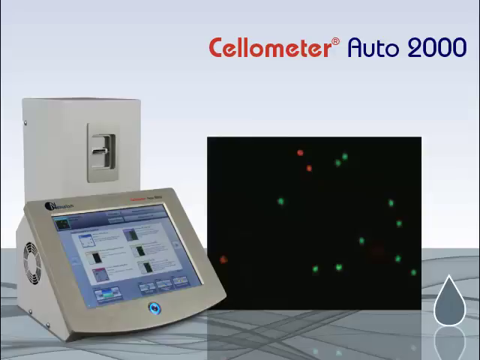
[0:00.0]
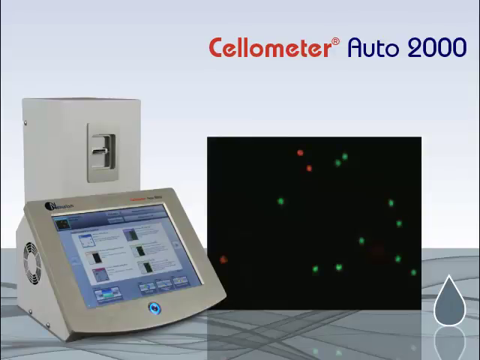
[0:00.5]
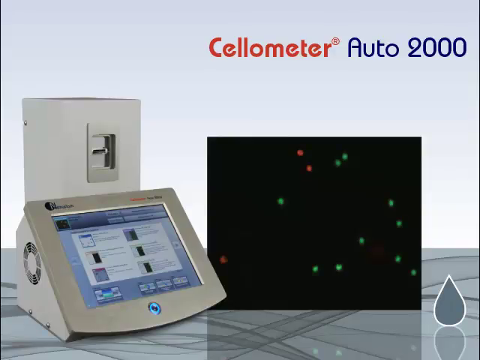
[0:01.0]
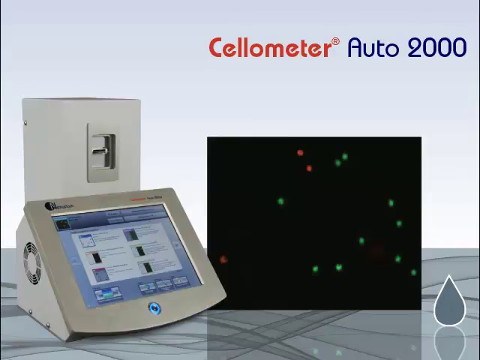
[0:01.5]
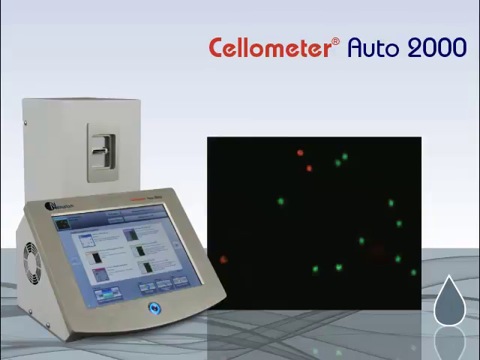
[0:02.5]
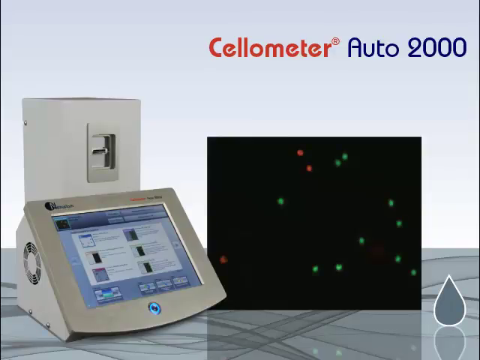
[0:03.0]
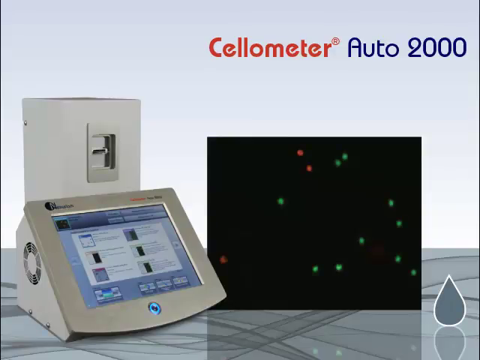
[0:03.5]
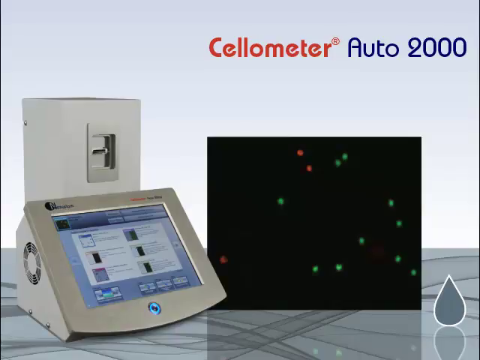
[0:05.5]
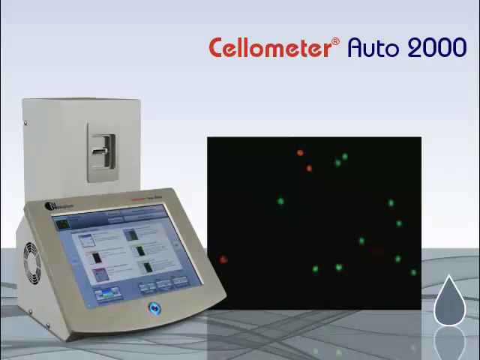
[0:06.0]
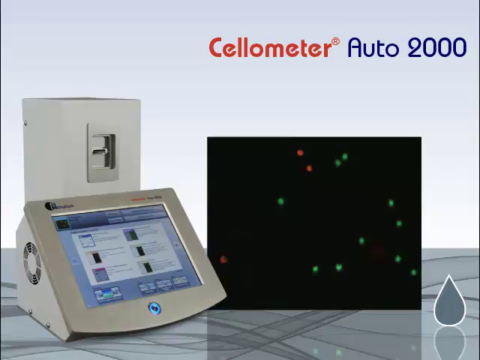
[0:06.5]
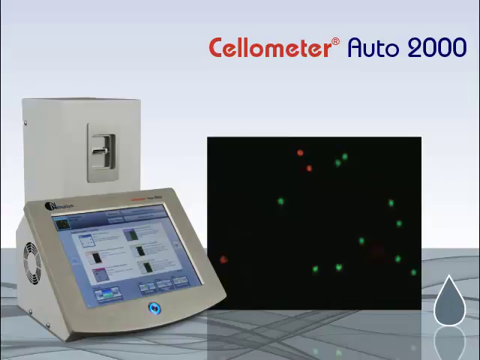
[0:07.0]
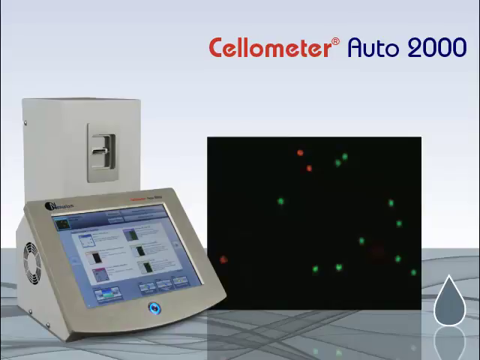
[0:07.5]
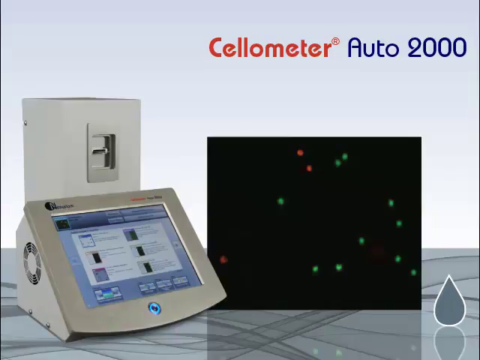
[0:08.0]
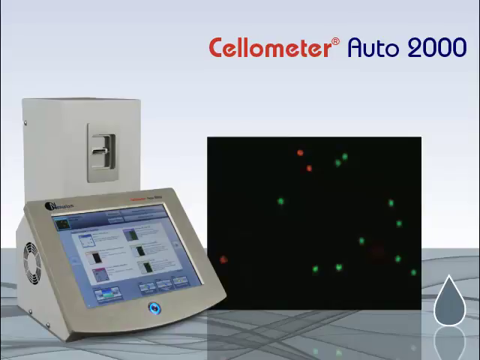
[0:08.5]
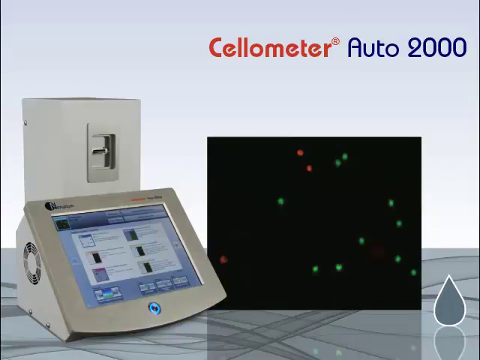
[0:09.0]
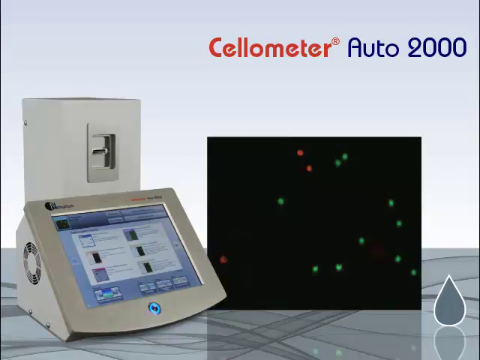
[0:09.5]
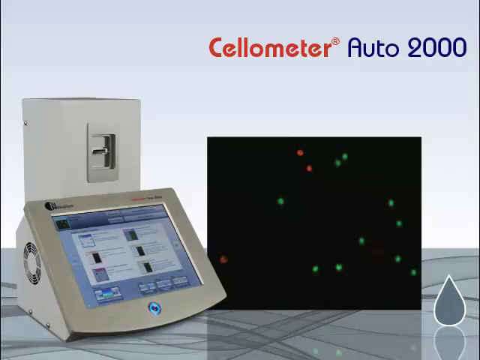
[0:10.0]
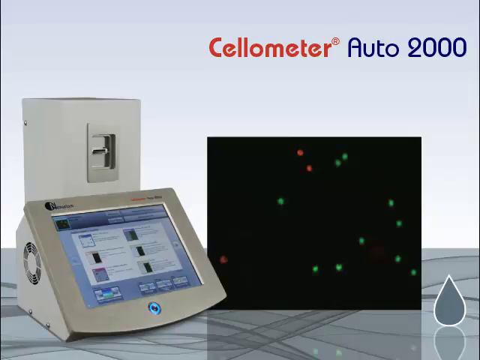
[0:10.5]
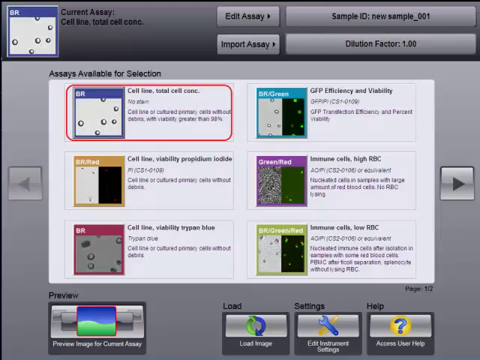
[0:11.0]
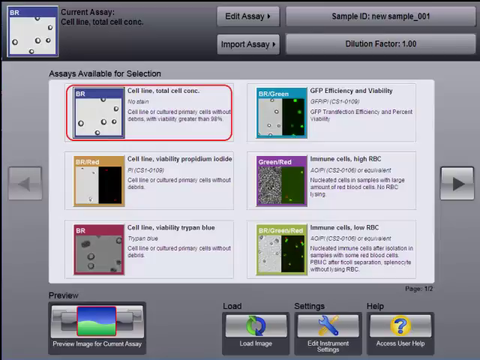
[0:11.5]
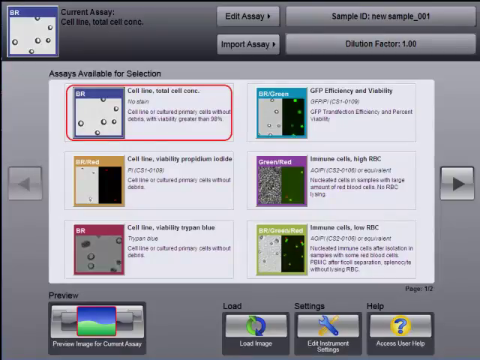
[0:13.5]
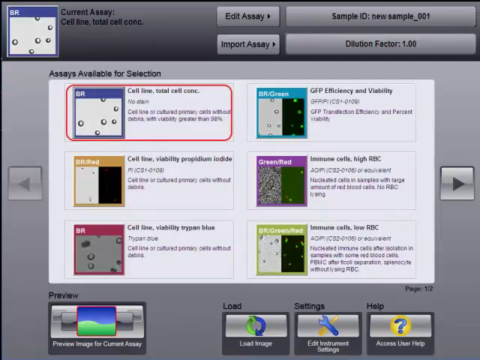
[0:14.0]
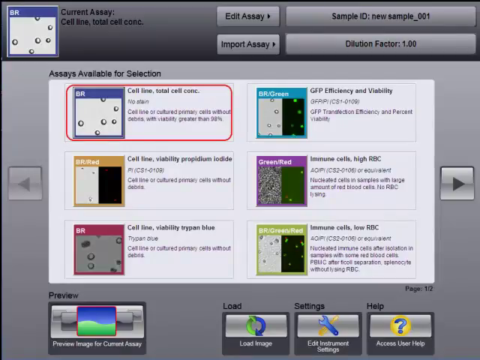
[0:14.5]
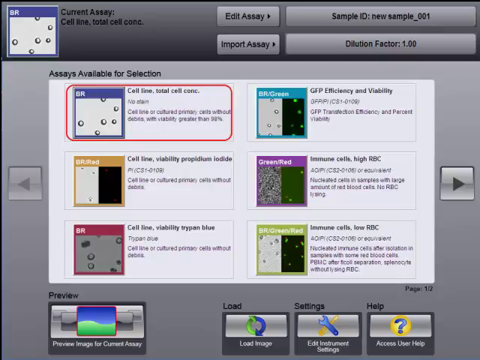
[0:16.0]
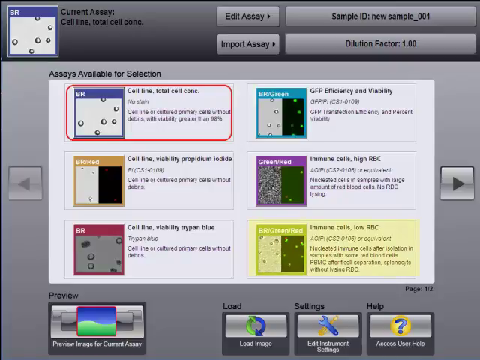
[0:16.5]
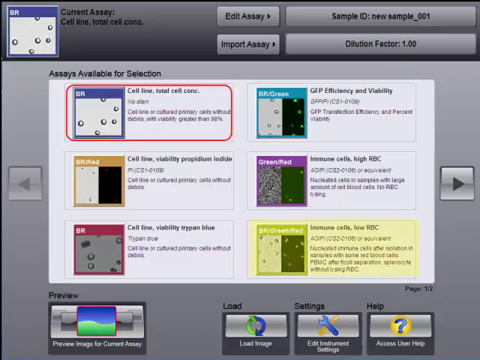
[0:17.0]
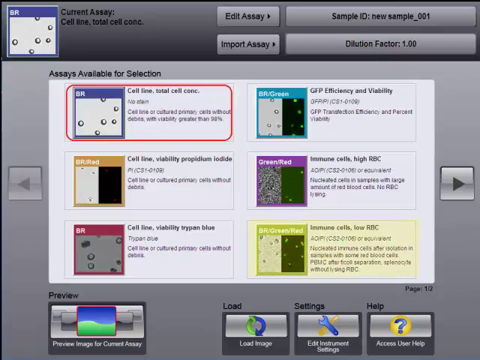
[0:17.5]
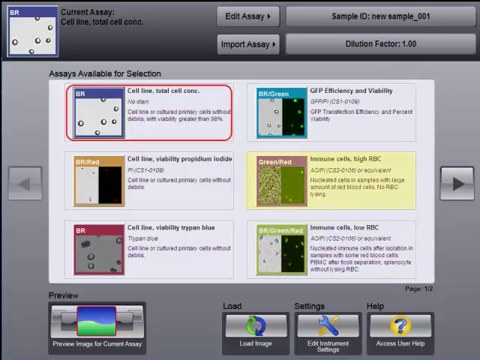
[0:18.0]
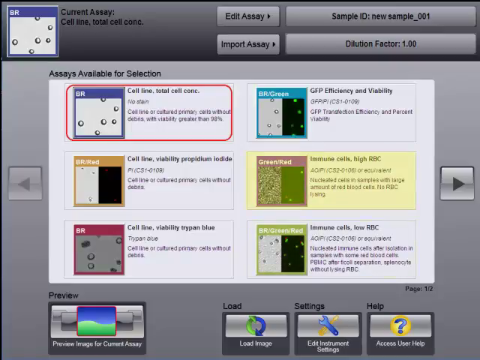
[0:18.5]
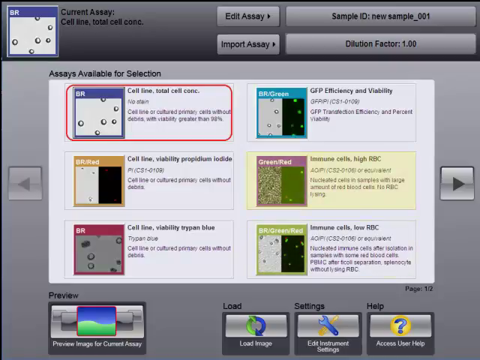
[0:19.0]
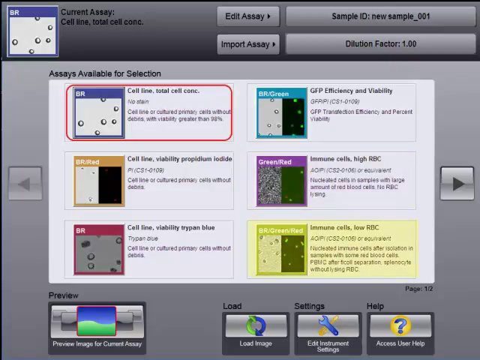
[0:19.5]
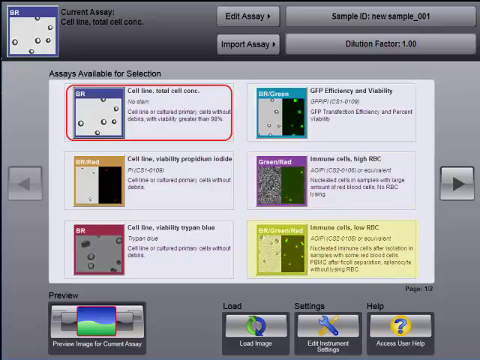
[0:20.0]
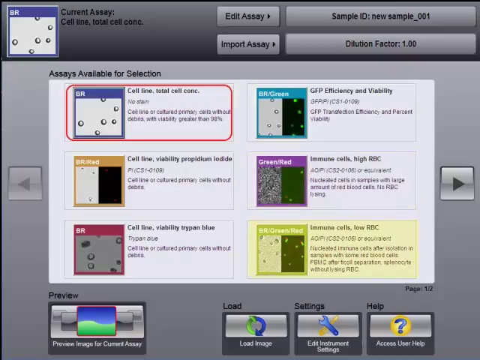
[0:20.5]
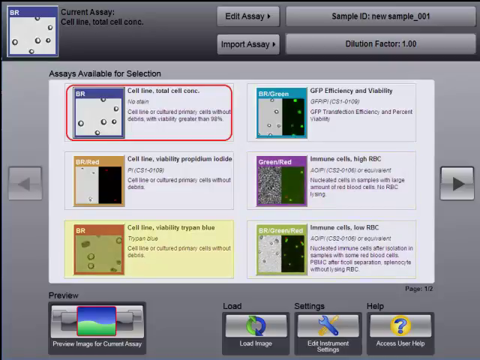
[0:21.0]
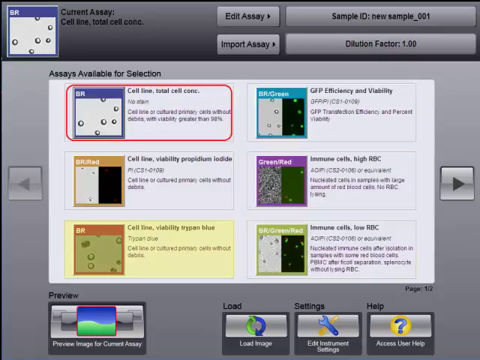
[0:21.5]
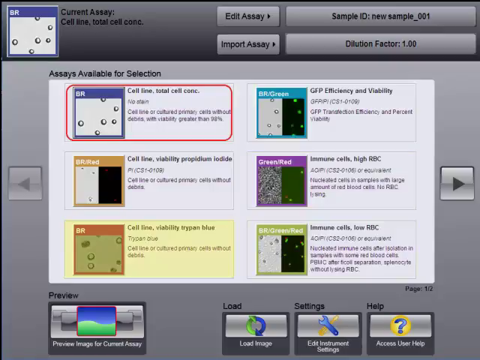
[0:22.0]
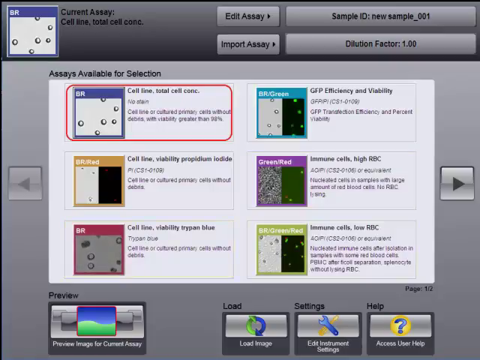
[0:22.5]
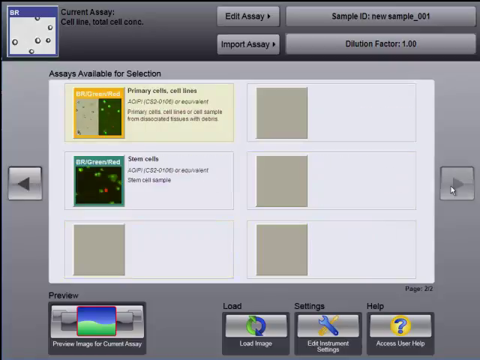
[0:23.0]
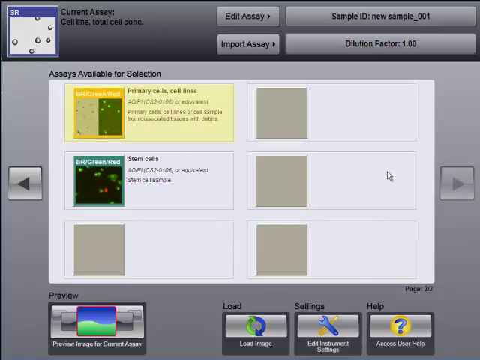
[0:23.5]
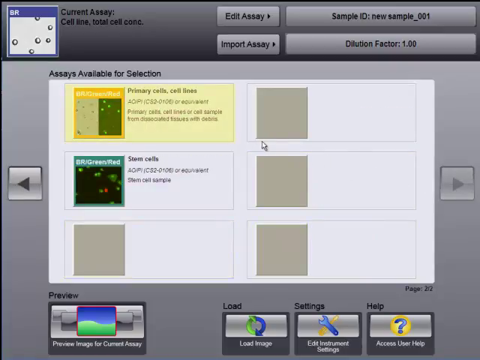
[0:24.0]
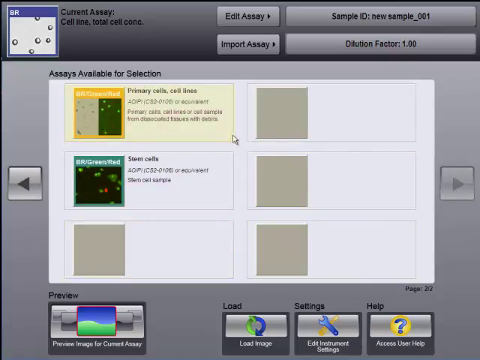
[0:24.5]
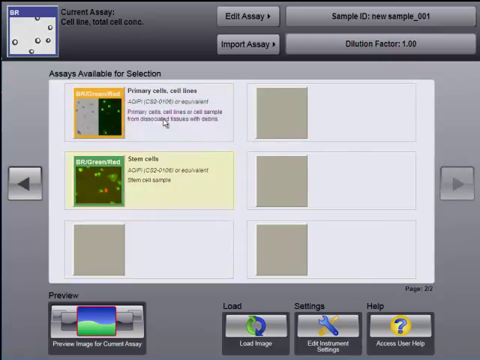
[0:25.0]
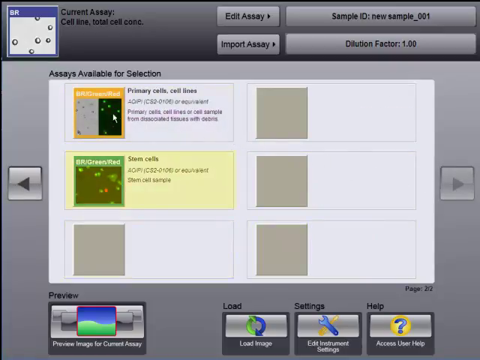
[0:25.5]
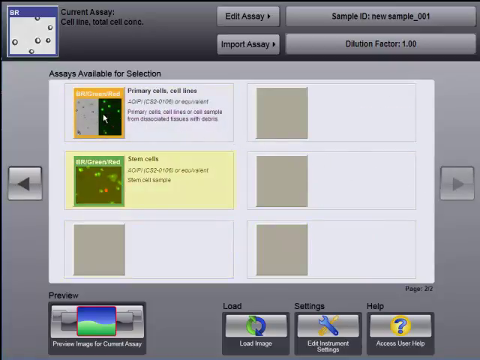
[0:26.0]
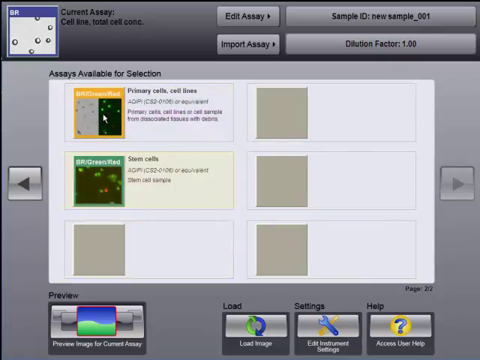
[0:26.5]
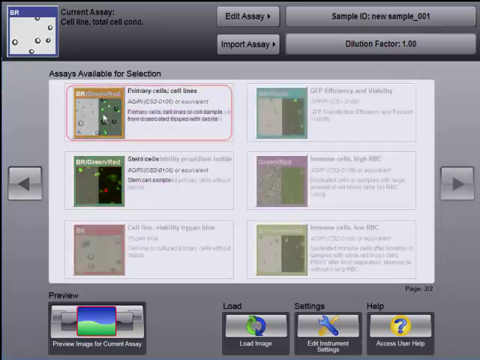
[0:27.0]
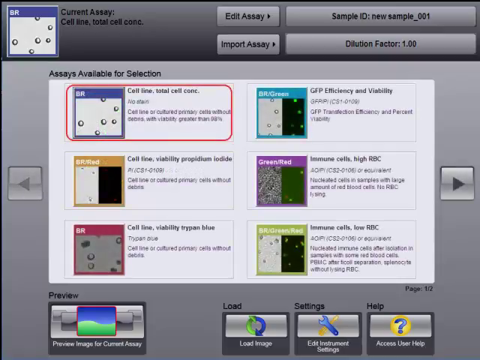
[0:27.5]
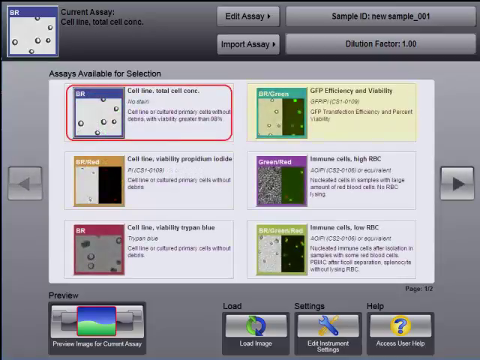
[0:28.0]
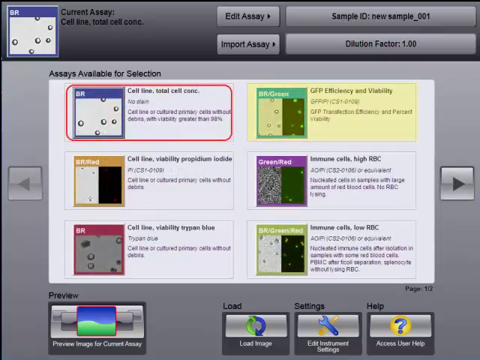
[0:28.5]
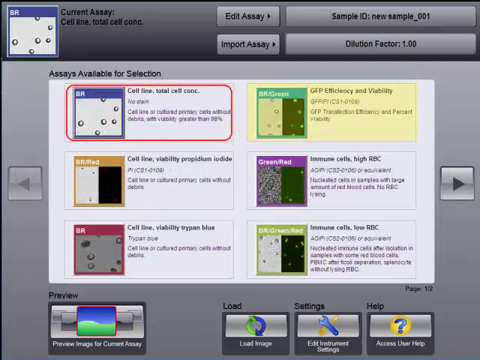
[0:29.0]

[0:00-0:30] The video opens with a picture of a medical device, which red text in the upper right of the screen identifies as the cellometer, spelled C-E-L-L-O-M-E-T-E-R; the name of the product is the Auto 2000. A medical screen with some icons on it is in the lower right, a CPU, also in white, is behind it, and a computer monitor showing a screen saver is to the right of both instruments. The overall colors are blue and black. The view then changes to what is on the cellometer's screen: the words "edit assay" and "import assay", along with options to set dilution factors, give sample names, and choose an assay available for selection. Some of the available assays have names like "cell line visibility" and "cell line total cell concentration". The screen stays up as a cursor moves across it, choosing some of the assays available for selection, and "immune cells high RBC" and "immune cells low RBC" are highlighted.